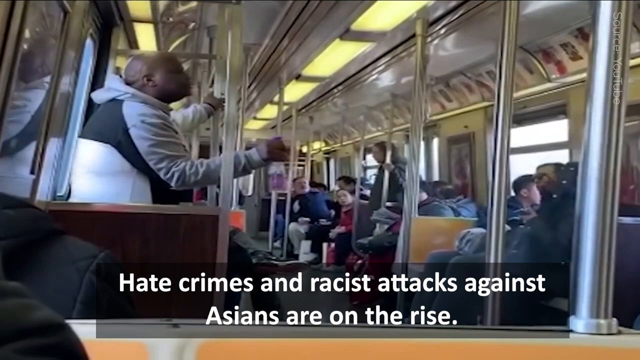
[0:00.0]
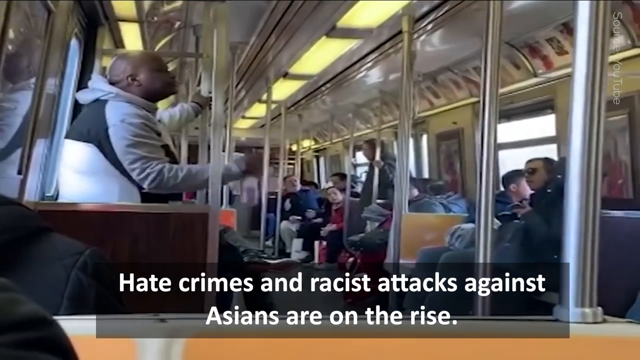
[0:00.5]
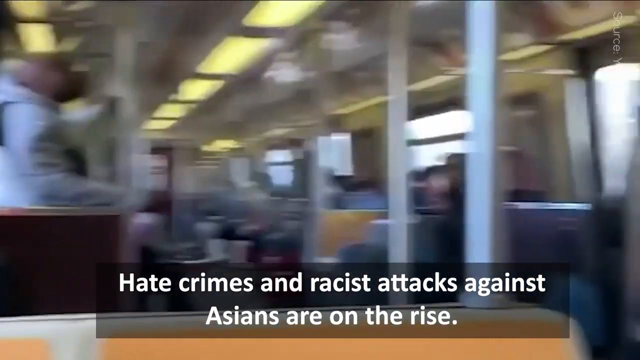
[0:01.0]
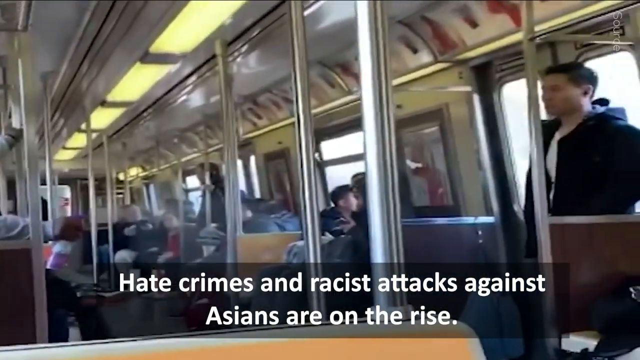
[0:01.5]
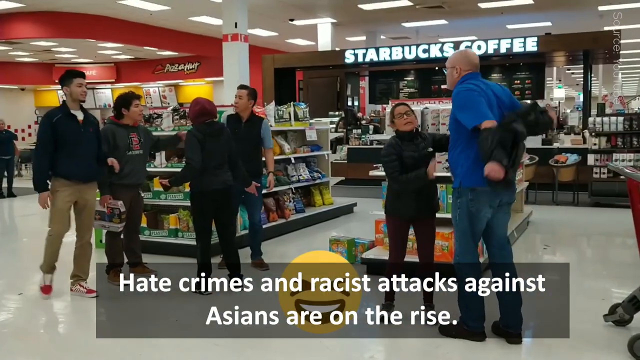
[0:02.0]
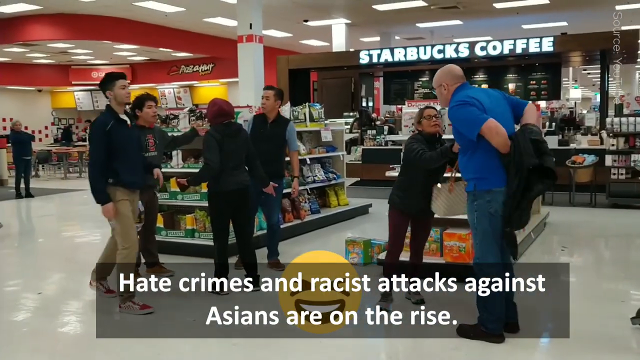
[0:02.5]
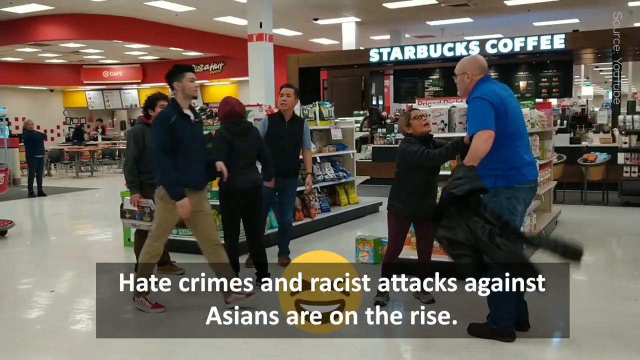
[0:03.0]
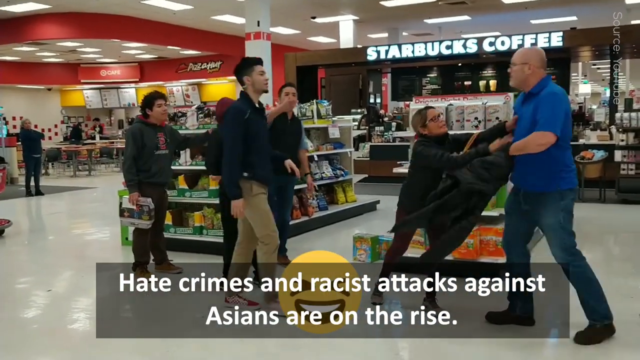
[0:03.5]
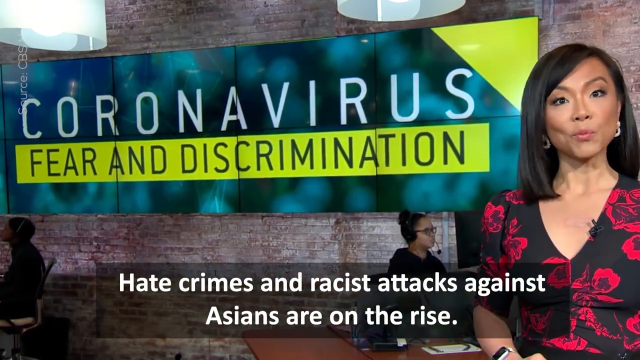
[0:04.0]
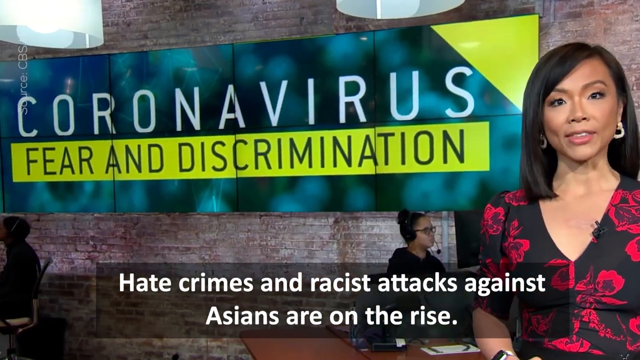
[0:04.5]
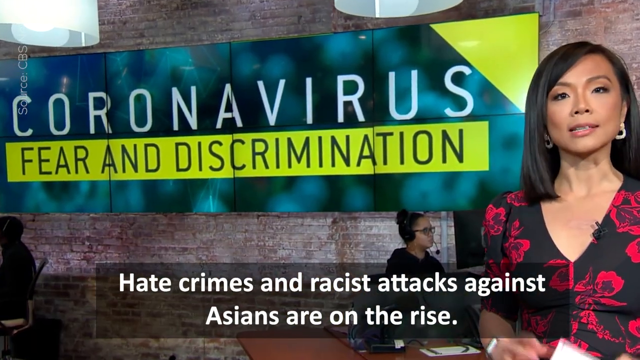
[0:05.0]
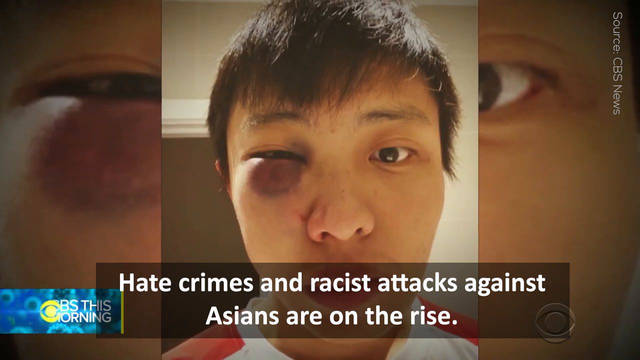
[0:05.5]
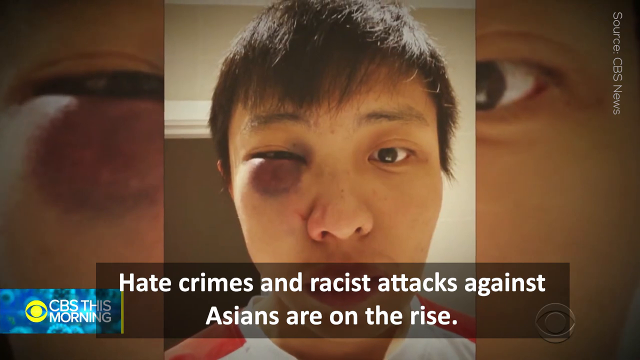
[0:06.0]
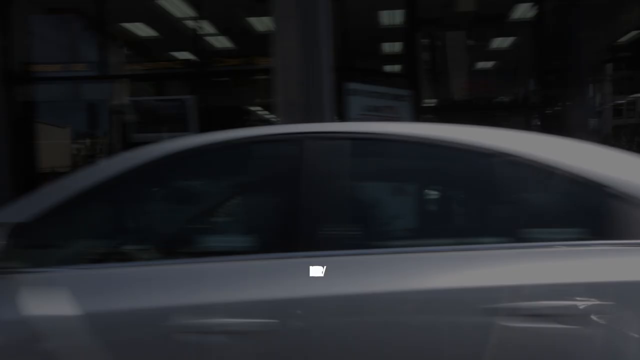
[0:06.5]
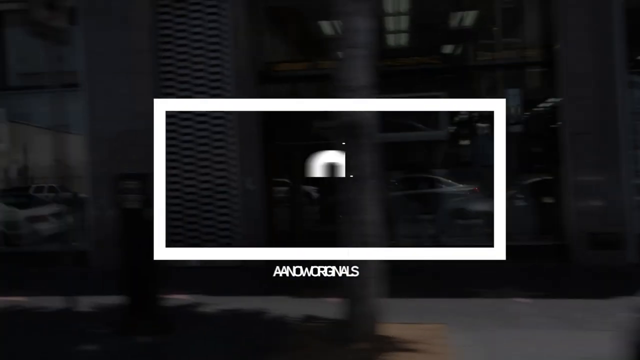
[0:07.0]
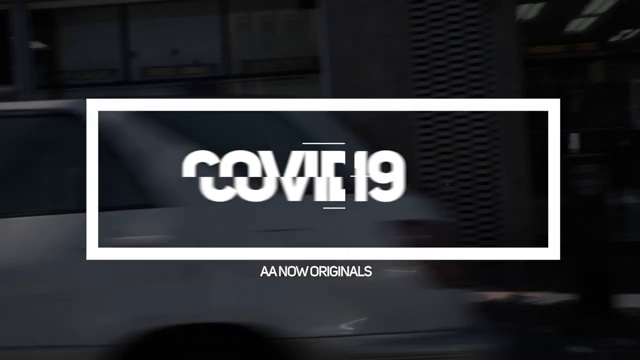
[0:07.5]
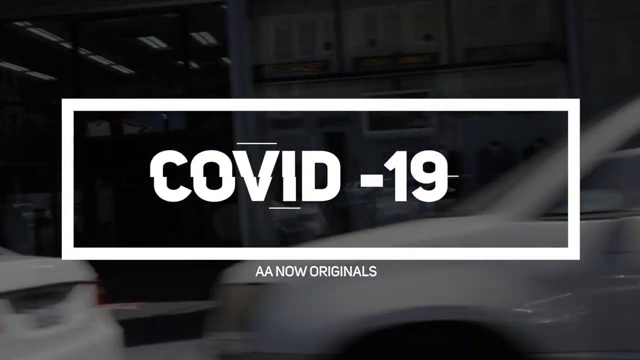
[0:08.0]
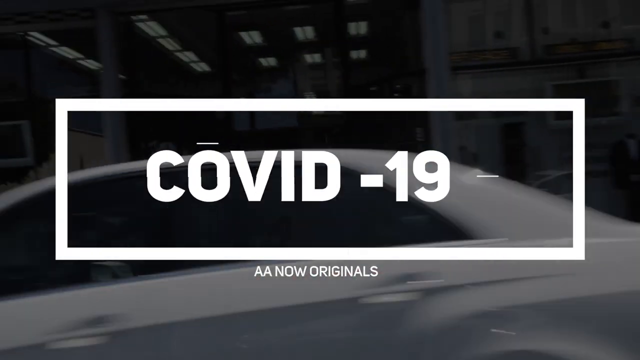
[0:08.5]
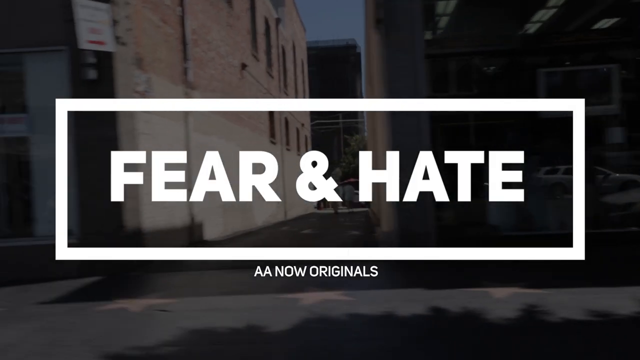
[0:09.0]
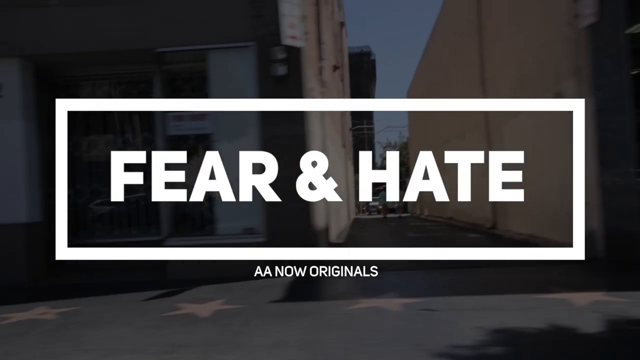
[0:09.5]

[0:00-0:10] A black person is sitting in a train with other people who seem to be Asian. A subtitle reads "hate crimes and racist attacks against Asians are on the rise." The scene shifts to a store marked "Starbucks coffee," where a person takes off his jacket, apparently to show he wants to beat another person; the people there seem to want to fight. Later a lady in a red and black top with flowers appears, and a screen at the back shows "coronavirus fear and discrimination," while the subtitle still reads "hate crimes and racist attacks against Asians are on the rise." A picture shows an Asian boy who was hit and has a blue eye. A heading "COVID-19" appears in a box, followed by "fear and hate" in a box, as the camera moves to show buildings around.